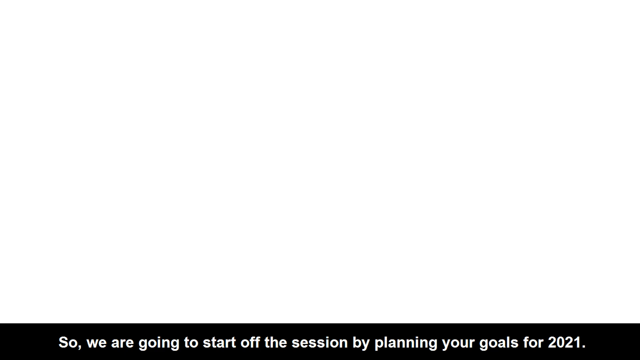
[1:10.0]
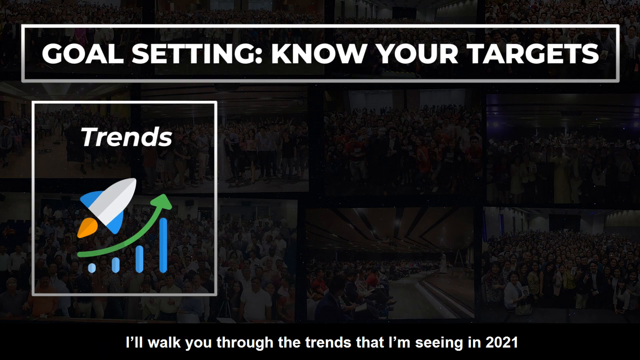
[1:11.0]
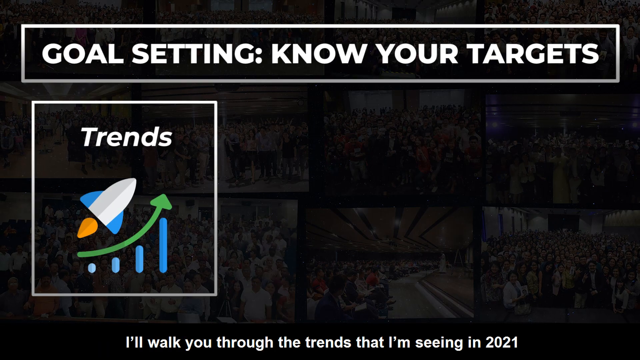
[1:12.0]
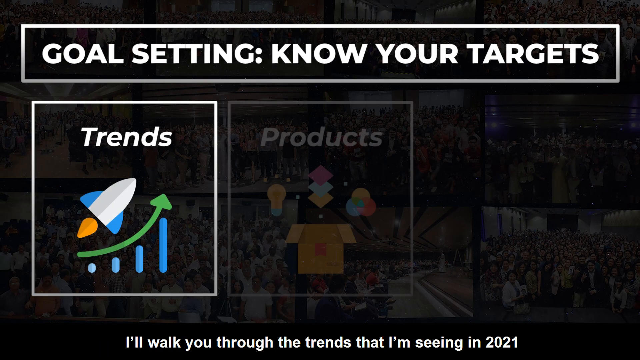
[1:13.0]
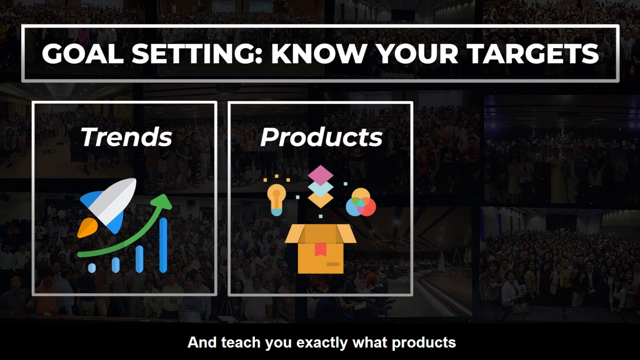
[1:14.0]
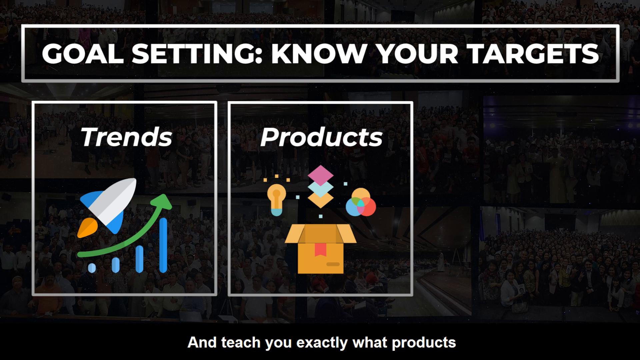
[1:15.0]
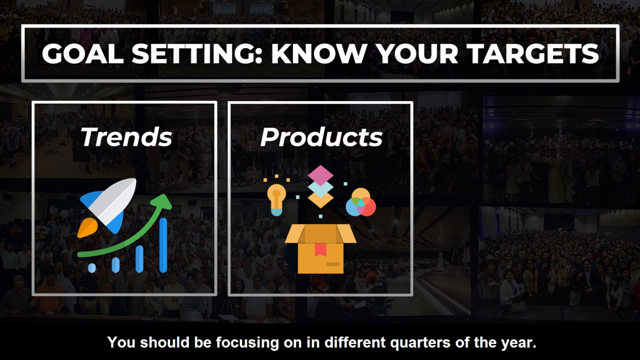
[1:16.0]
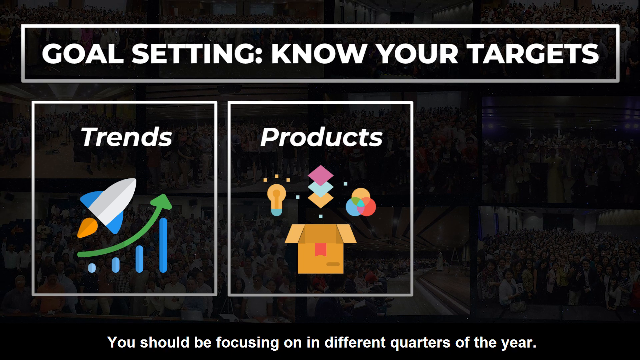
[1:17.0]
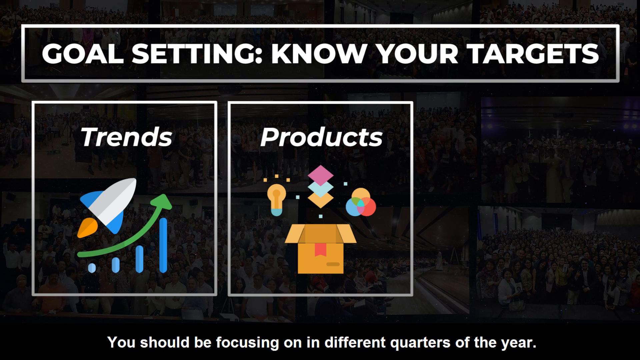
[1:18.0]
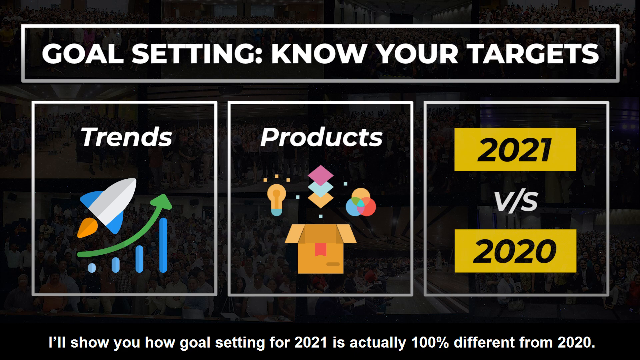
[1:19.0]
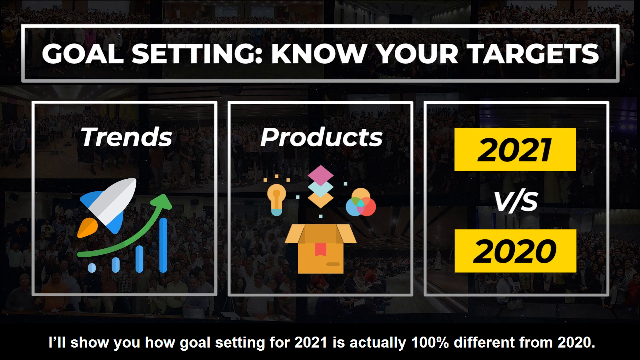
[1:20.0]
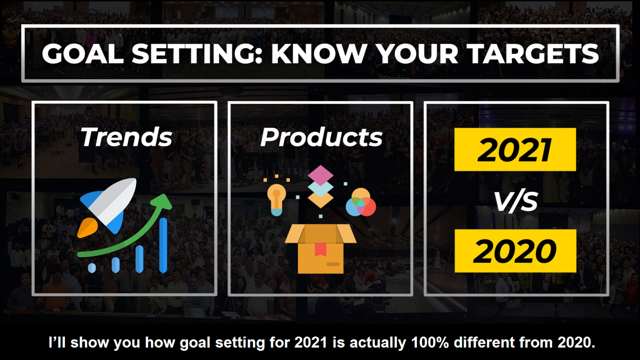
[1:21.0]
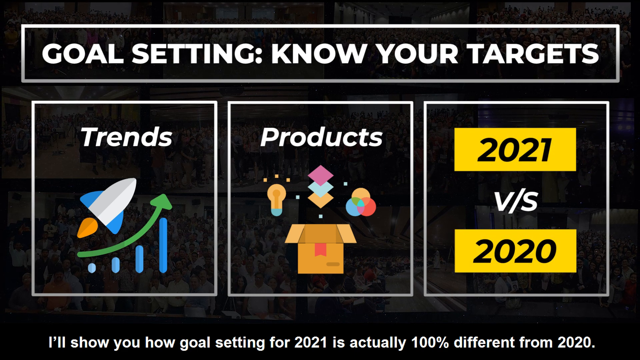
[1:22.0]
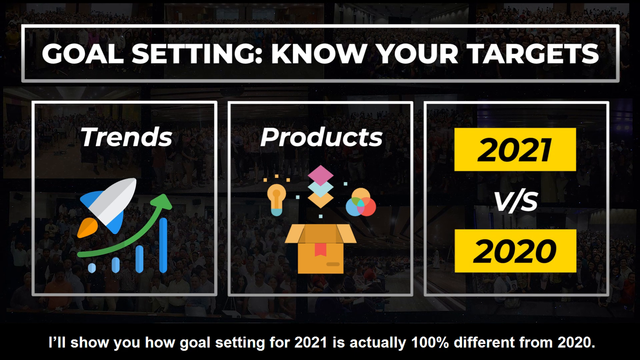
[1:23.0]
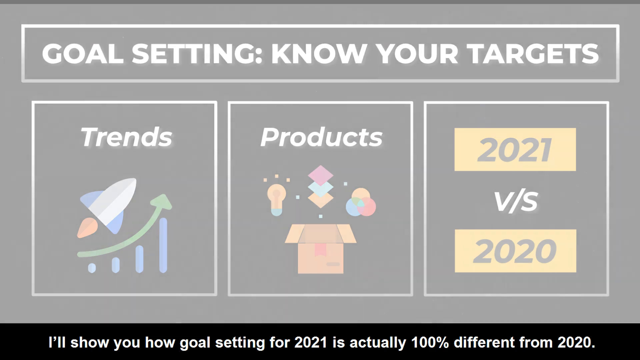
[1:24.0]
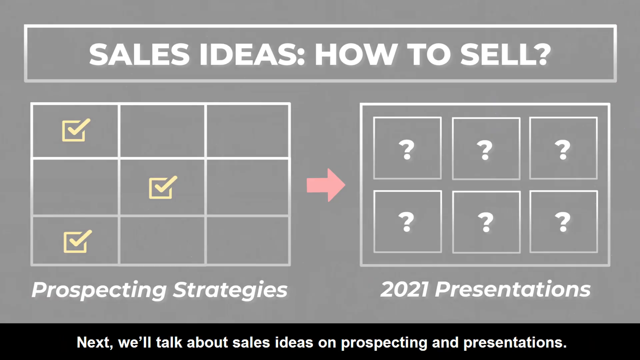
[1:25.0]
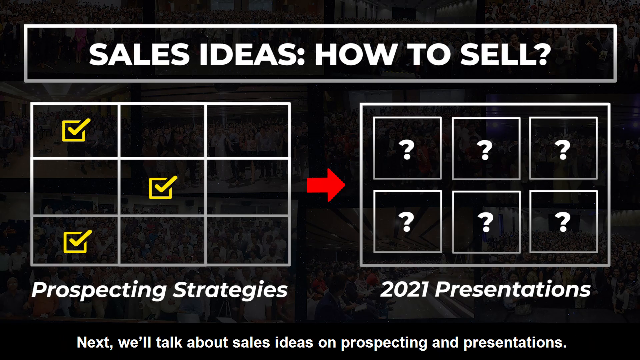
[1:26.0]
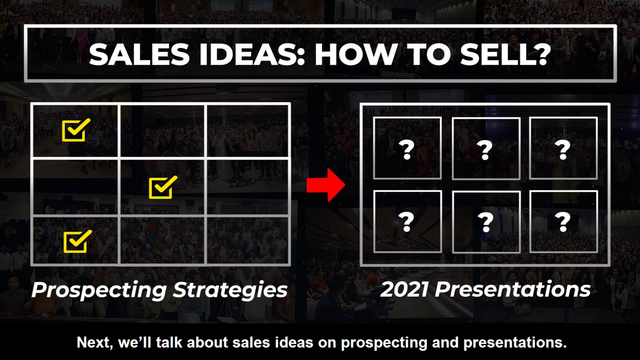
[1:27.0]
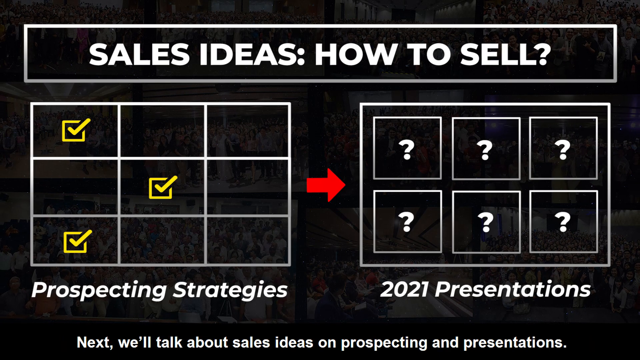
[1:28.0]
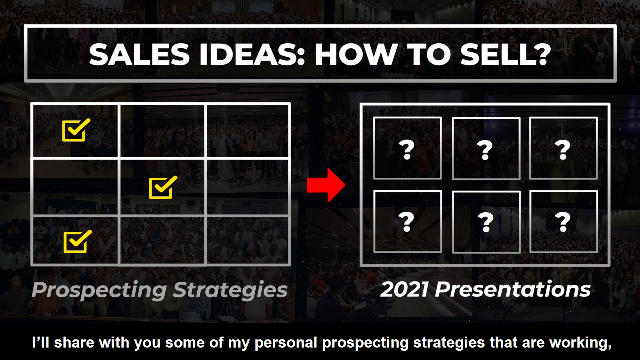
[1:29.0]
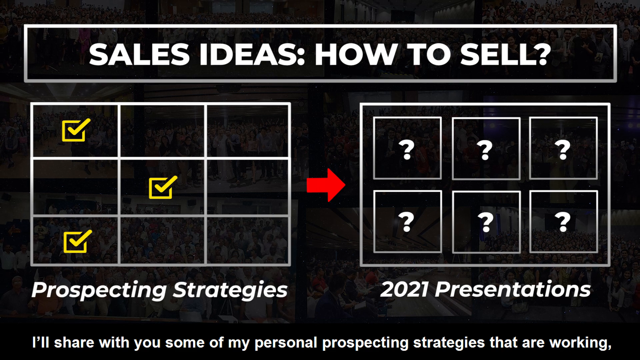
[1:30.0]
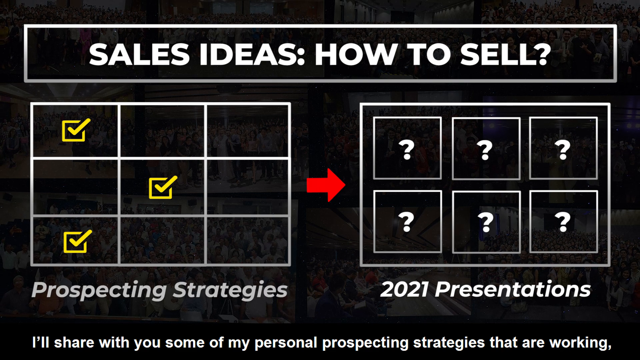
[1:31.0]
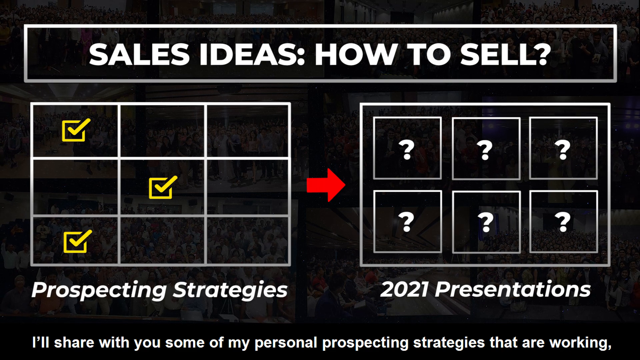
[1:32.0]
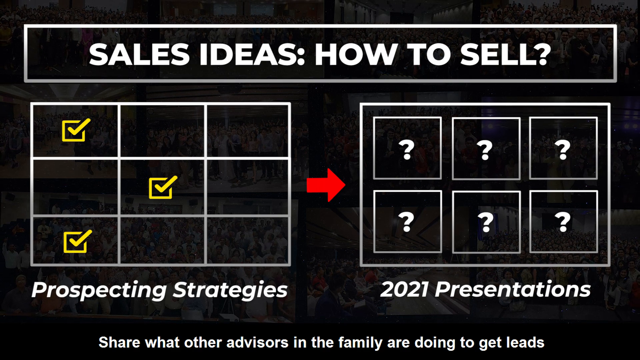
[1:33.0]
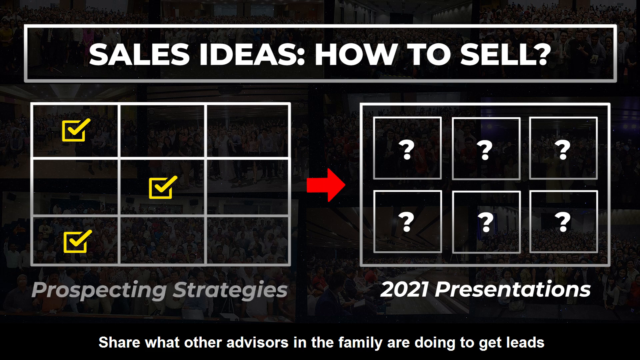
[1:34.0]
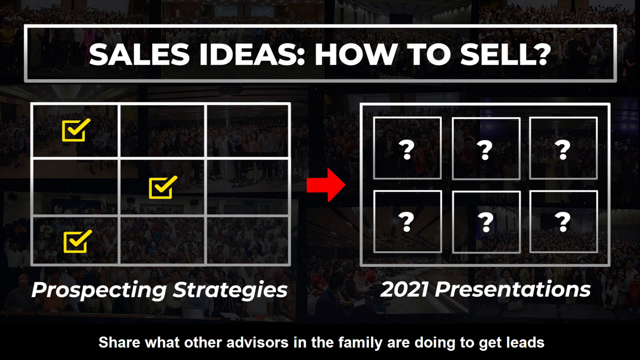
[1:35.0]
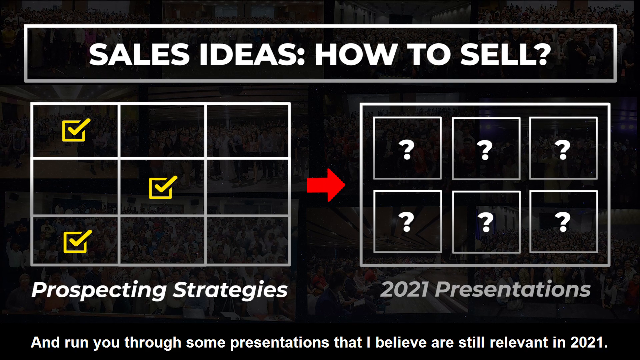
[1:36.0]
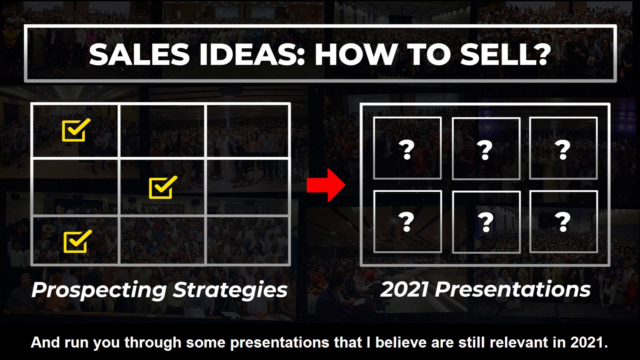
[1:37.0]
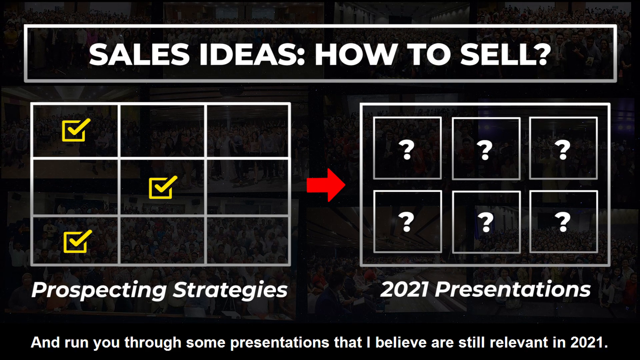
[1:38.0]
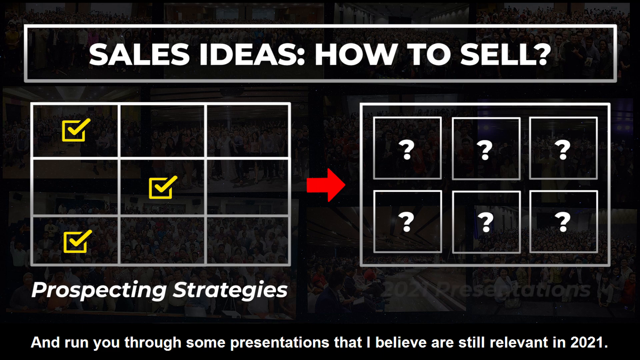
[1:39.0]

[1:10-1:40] On a black background, a black rectangular shape appears at the top with the words "goal-setting, know your targets." Three boxes pop up. The first says "trends" and shows a rocket with an arrow going up. The second says "products" and shows an illustrated box with multiple products coming out of it. The third says "2021 versus 2020." The next screen has a rectangular box at the top reading "sales ideas, how to sell" in bold capital white letters. On the left is a grid of nine small boxes, three of which contain check marks, with "prospecting strategies" written underneath. A red arrow points to the next box, which contains six boxes, each with a question mark.